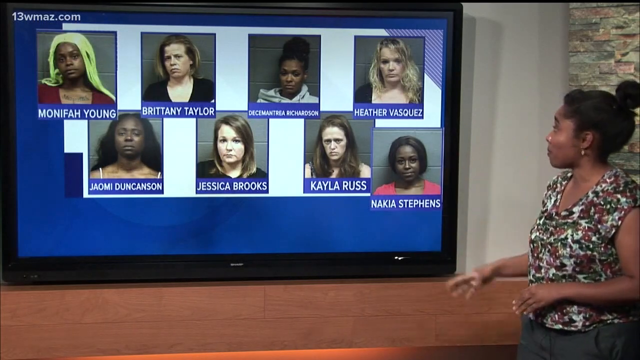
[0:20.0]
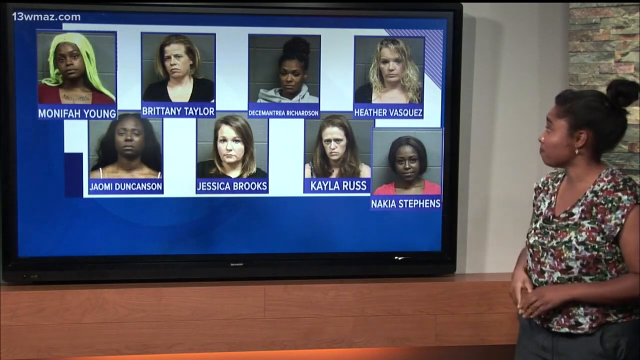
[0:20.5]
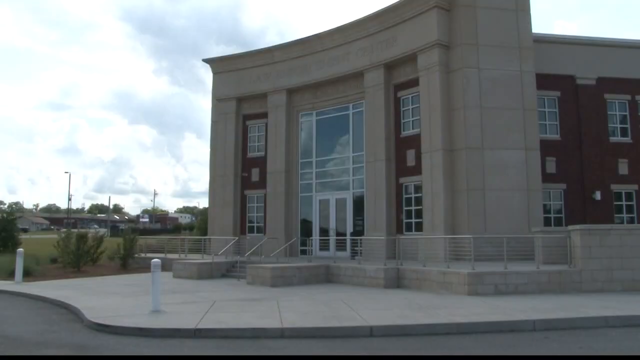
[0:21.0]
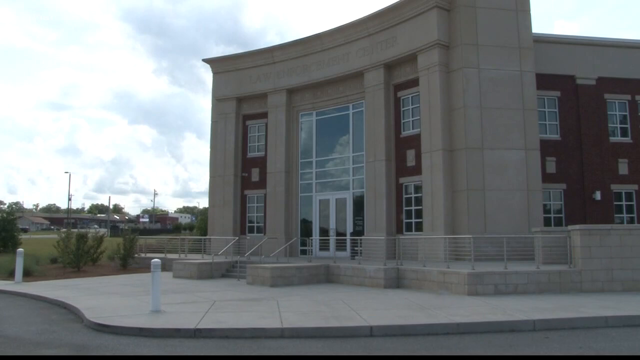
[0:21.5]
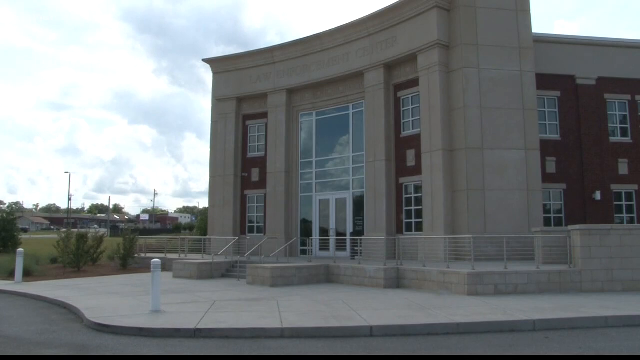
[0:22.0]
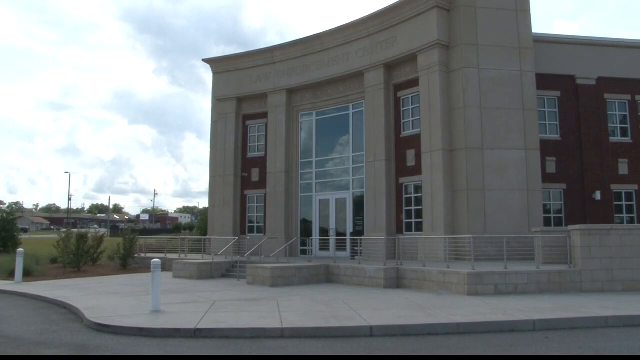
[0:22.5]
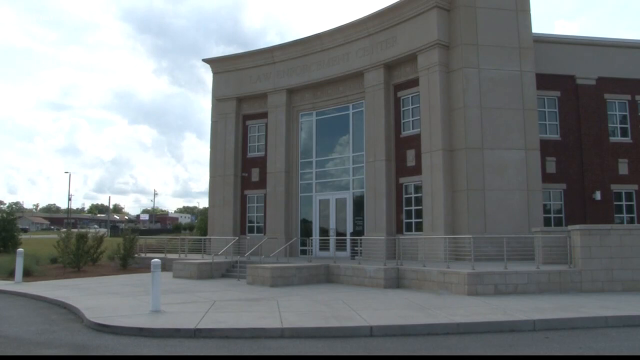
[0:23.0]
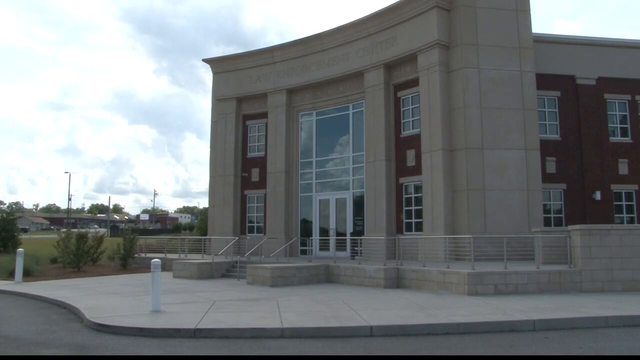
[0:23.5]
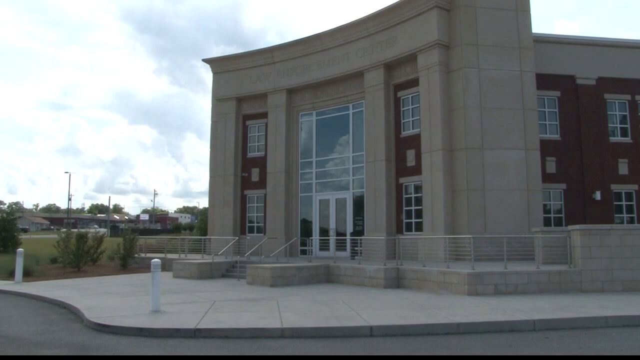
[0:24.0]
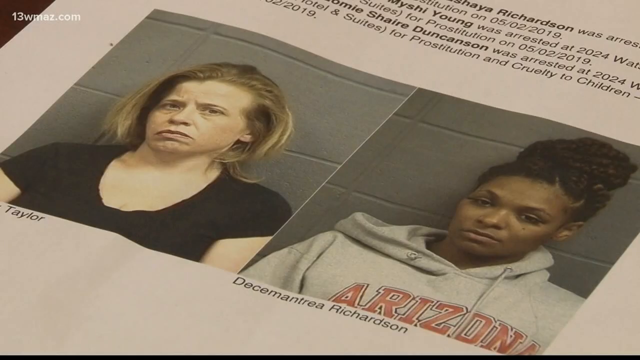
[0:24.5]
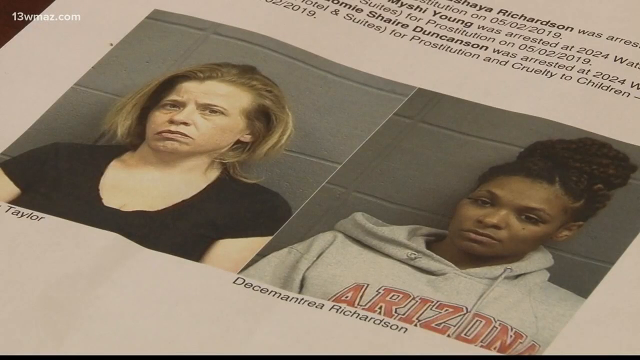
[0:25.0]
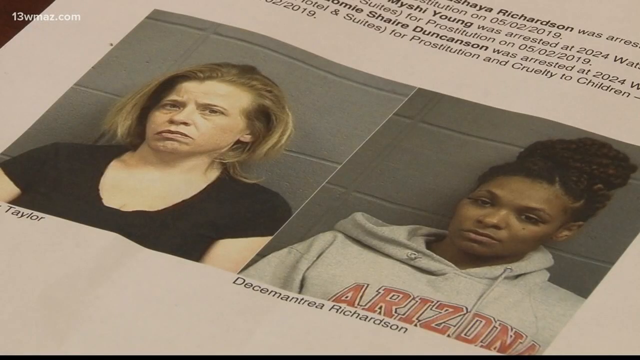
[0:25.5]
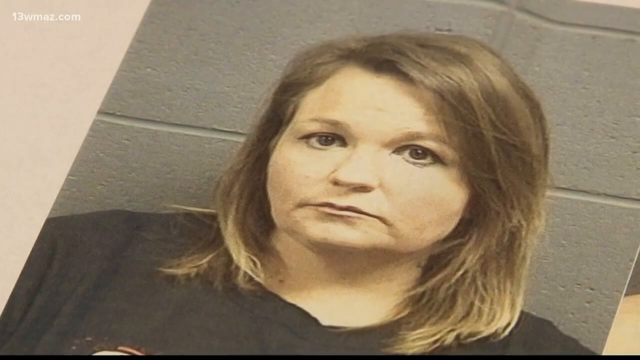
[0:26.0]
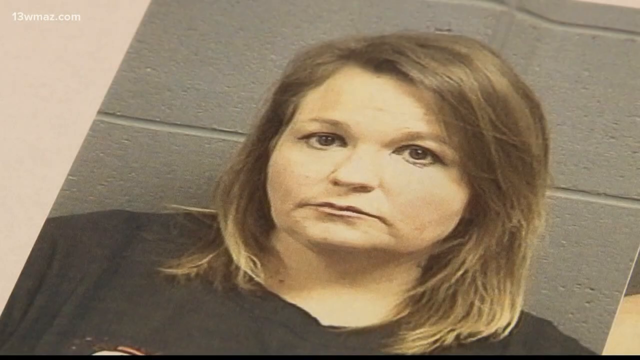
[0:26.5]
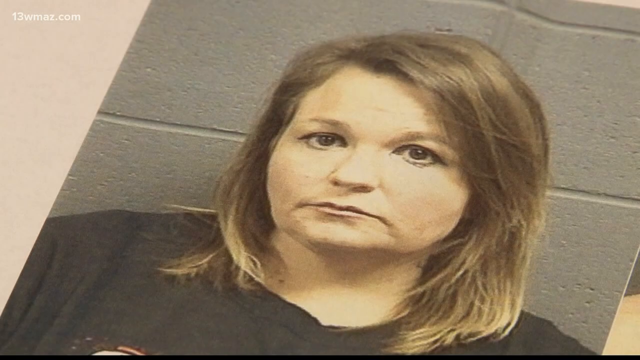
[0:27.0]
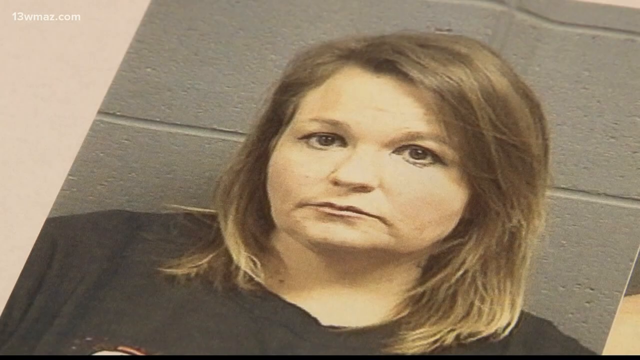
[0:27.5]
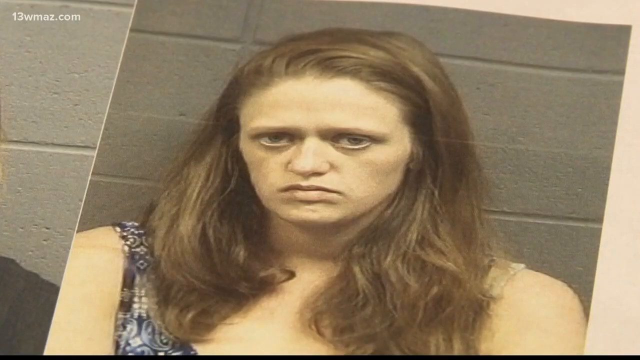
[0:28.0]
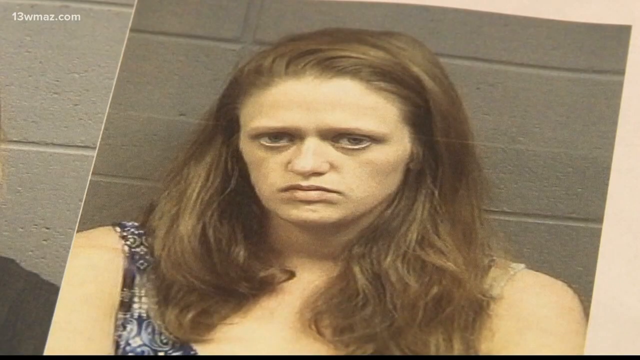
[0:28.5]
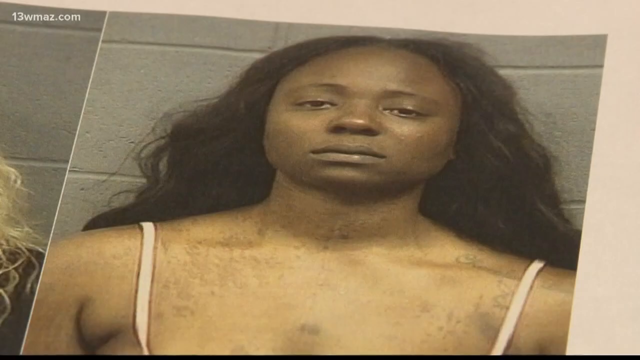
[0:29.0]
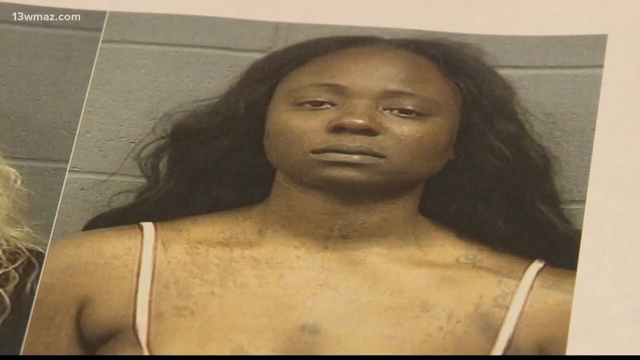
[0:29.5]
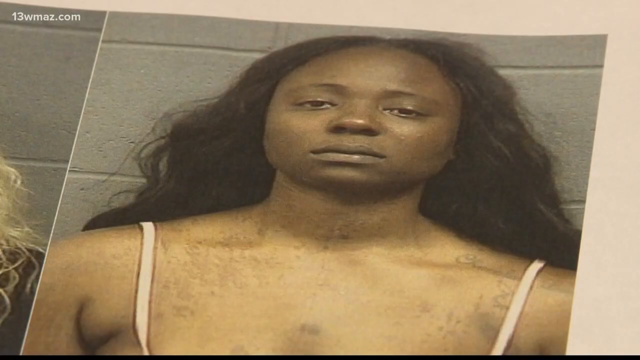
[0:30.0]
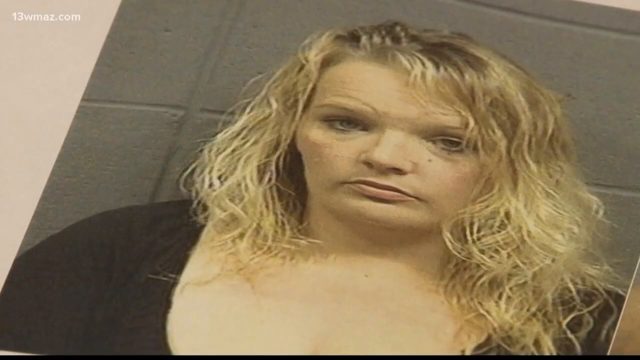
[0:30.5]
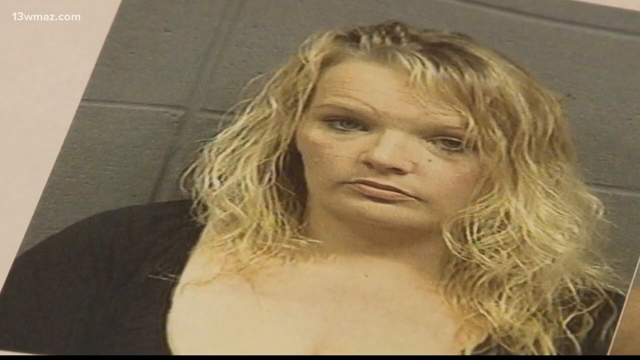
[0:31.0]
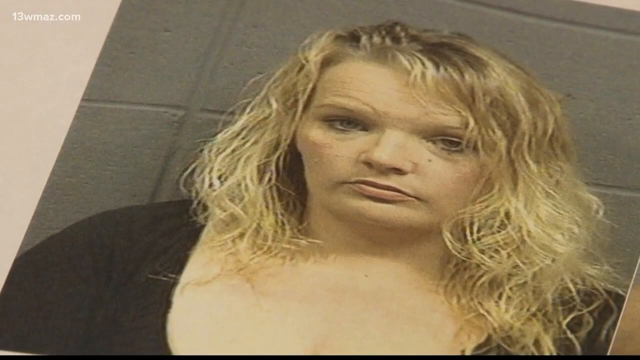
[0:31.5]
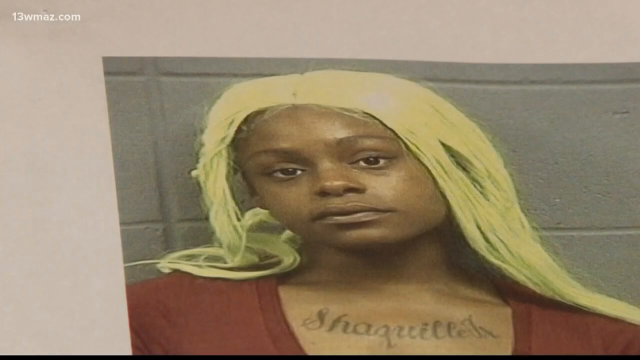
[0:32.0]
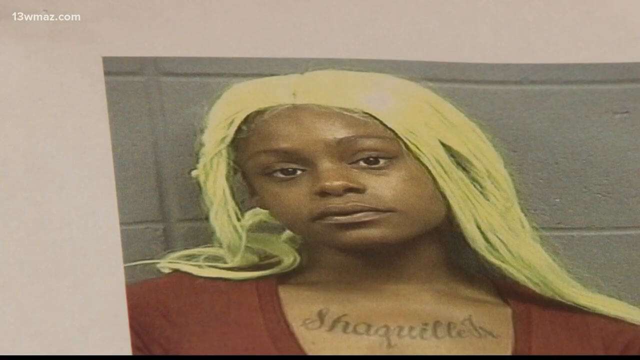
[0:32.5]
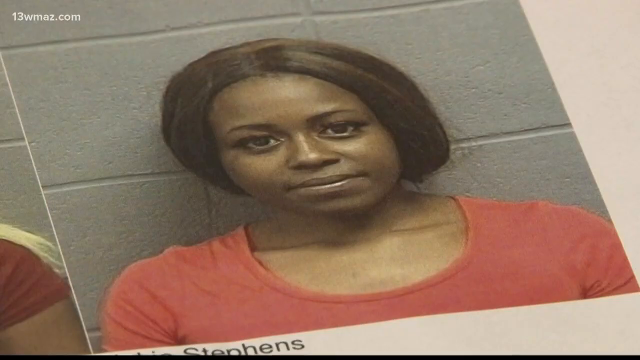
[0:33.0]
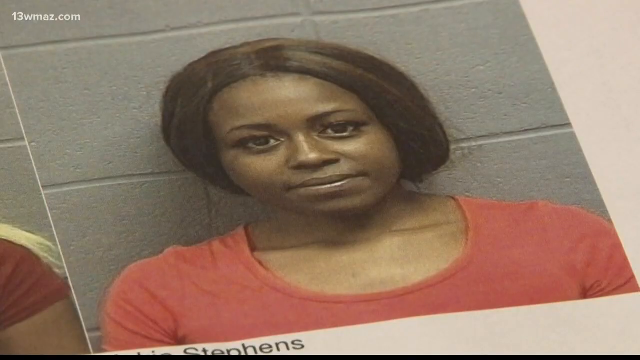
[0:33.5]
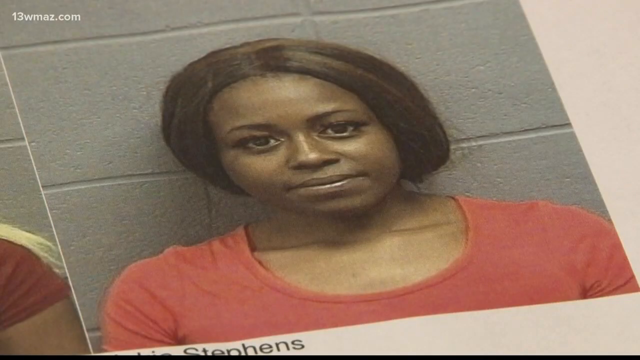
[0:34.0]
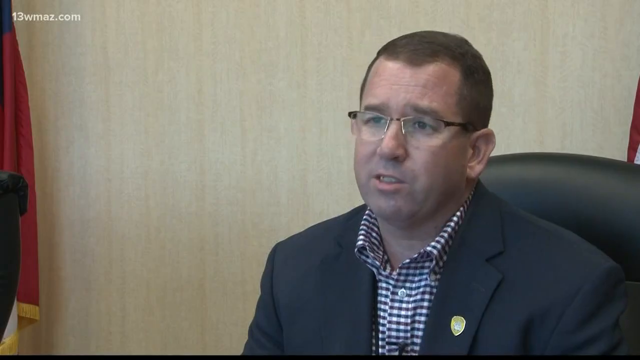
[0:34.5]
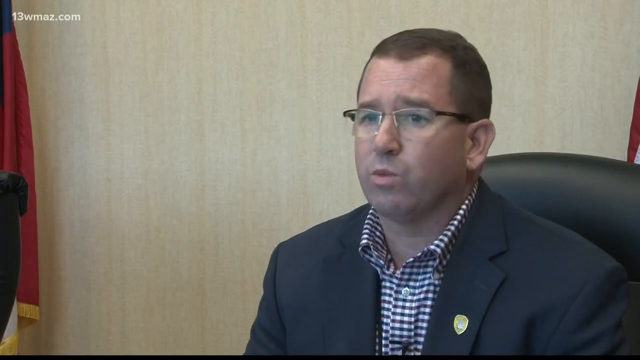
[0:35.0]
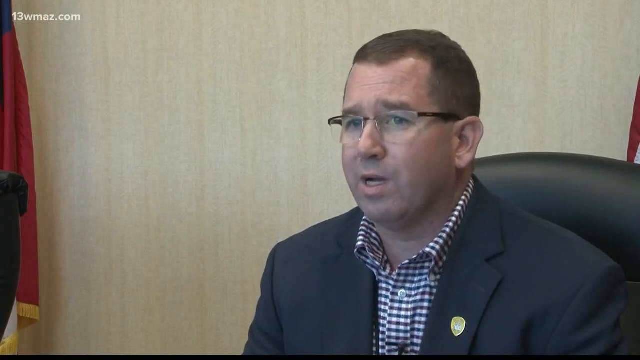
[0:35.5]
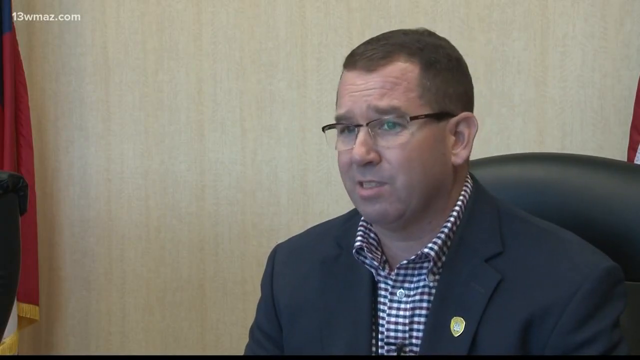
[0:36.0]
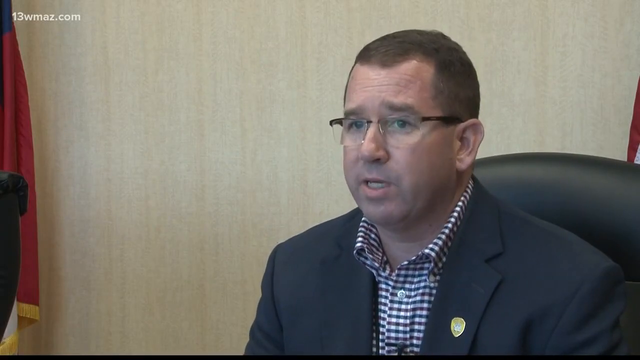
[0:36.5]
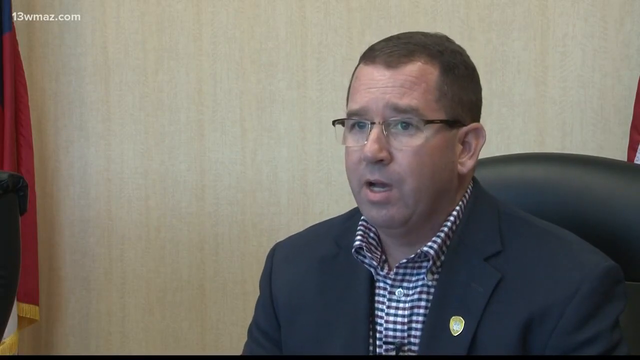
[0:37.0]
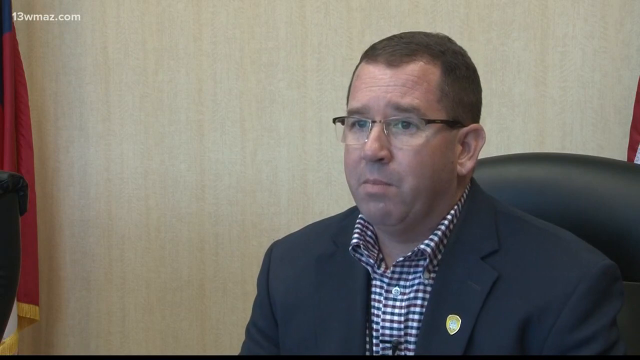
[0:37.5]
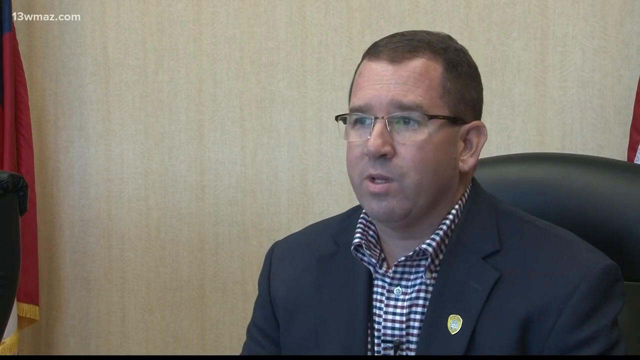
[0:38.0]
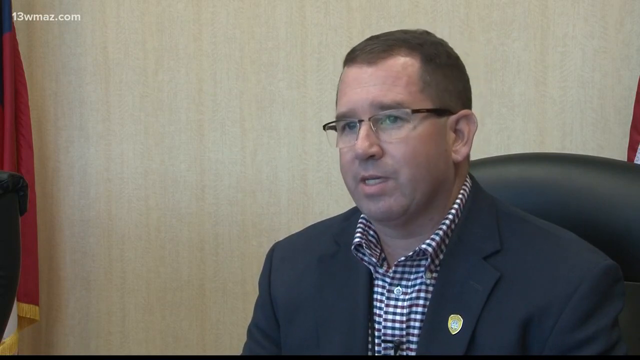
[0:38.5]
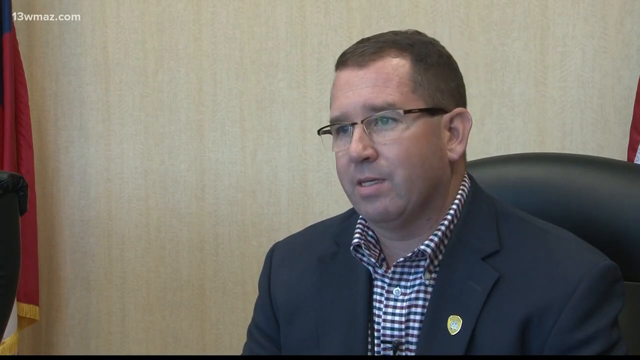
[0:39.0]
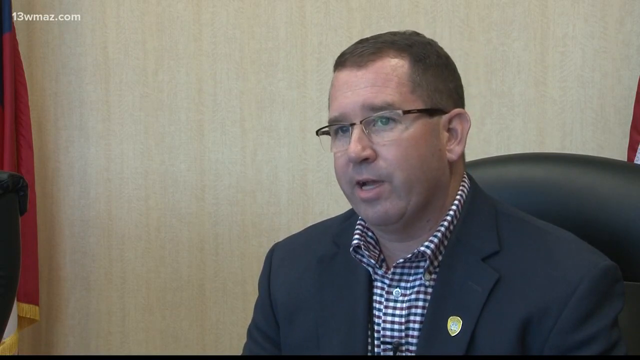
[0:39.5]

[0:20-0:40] A very big building with many windows and one big window on the front appears. The caption is then shown much bigger, with two people: one white, named Taylor, and the other a black person. The view moves forward to a preview, and another picture shows a woman standing behind a wall, followed by a black woman also standing behind a wall. At the top left, "18WMABED.COM" is written. Several women are continuously shown, all standing behind the wall. Suddenly a man on the right side speaks while facing the camera. He wears glasses, a white and black jacket and a checkered shirt, and sits on a black chair. The background where he is seated is light brown, and in the corner there is what looks like a flag.